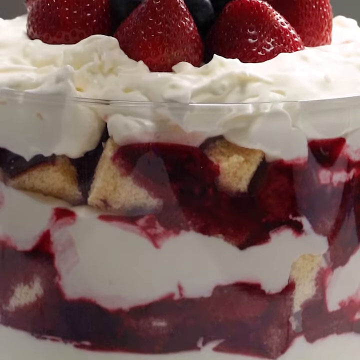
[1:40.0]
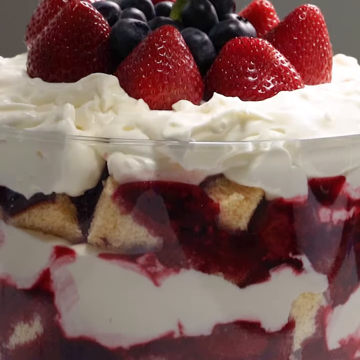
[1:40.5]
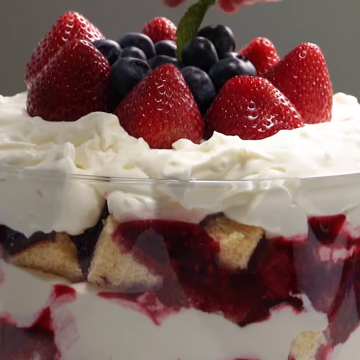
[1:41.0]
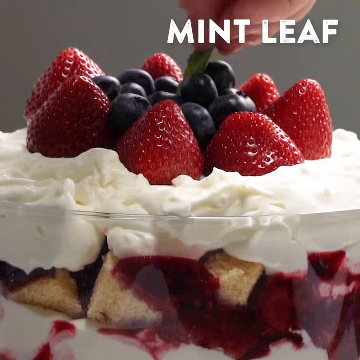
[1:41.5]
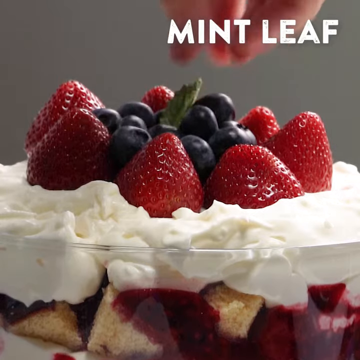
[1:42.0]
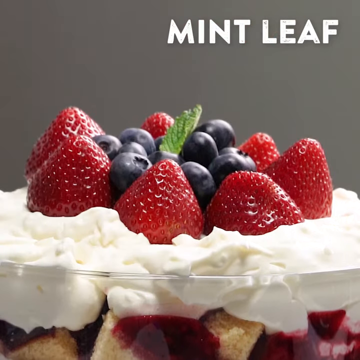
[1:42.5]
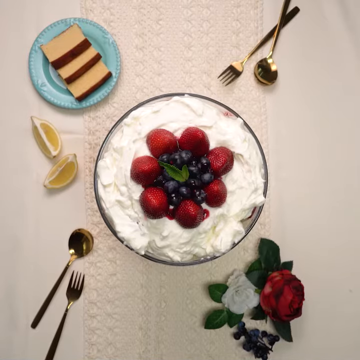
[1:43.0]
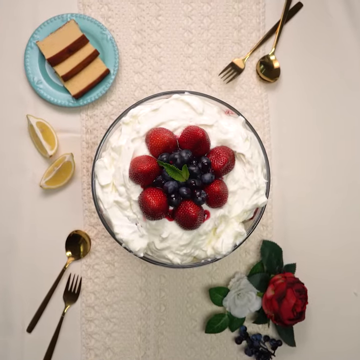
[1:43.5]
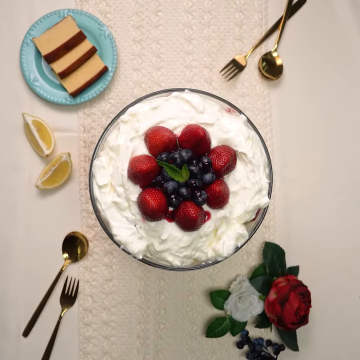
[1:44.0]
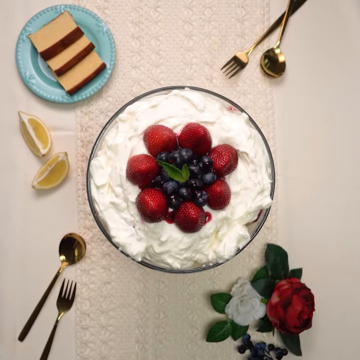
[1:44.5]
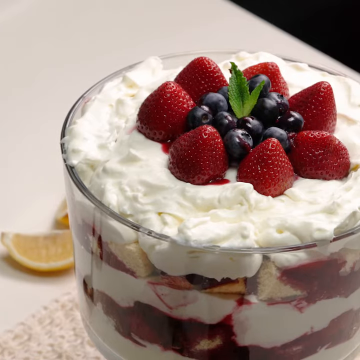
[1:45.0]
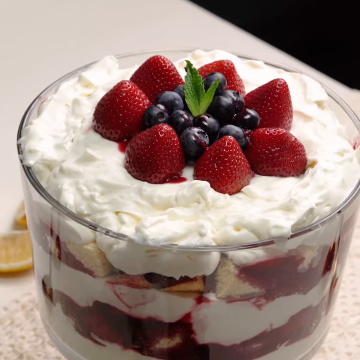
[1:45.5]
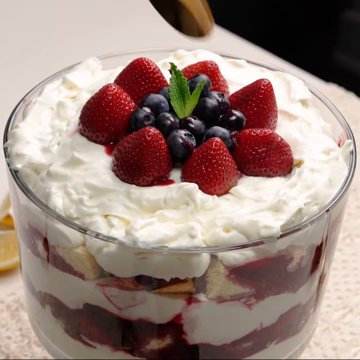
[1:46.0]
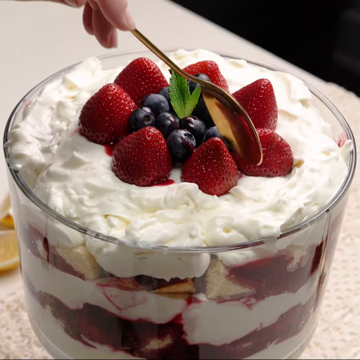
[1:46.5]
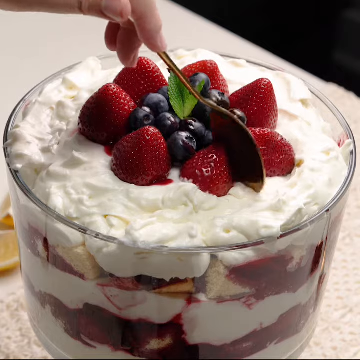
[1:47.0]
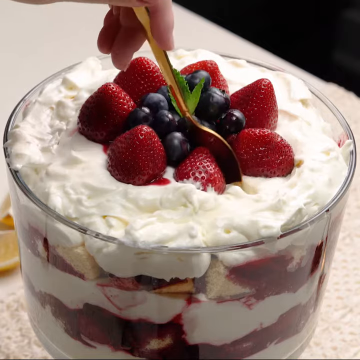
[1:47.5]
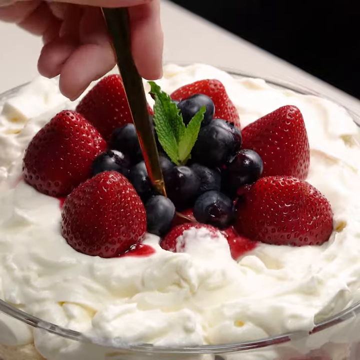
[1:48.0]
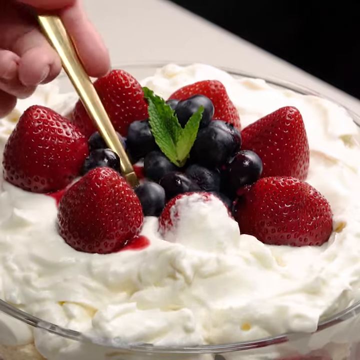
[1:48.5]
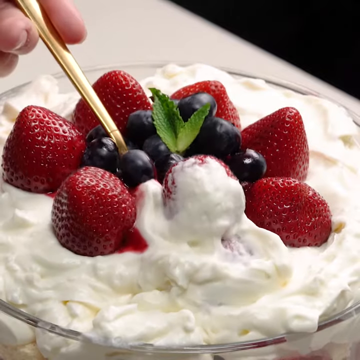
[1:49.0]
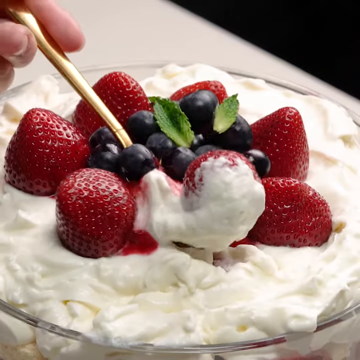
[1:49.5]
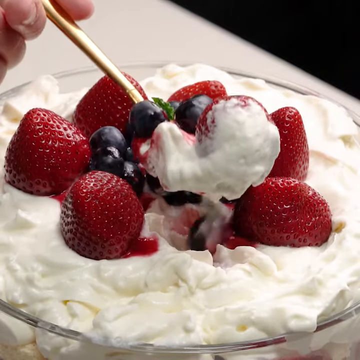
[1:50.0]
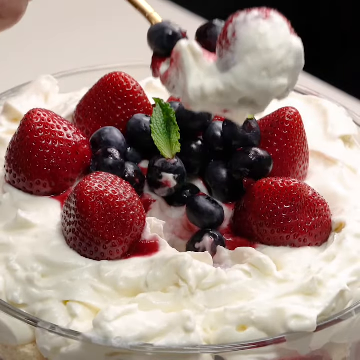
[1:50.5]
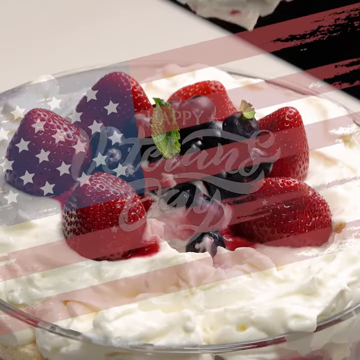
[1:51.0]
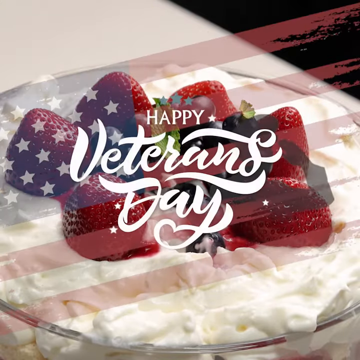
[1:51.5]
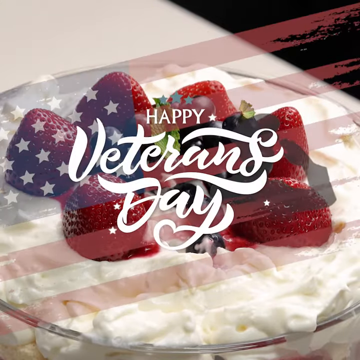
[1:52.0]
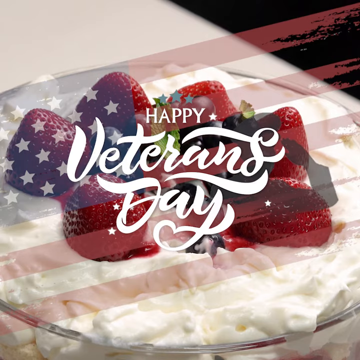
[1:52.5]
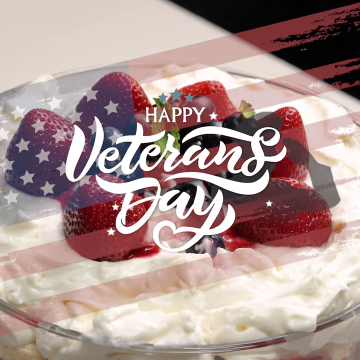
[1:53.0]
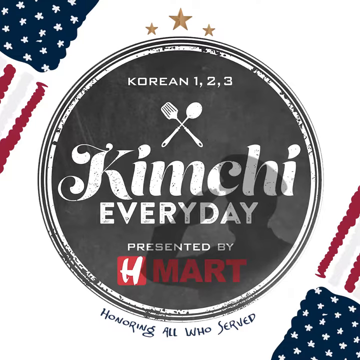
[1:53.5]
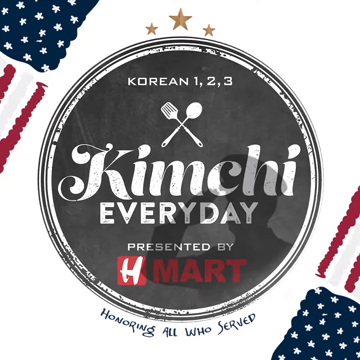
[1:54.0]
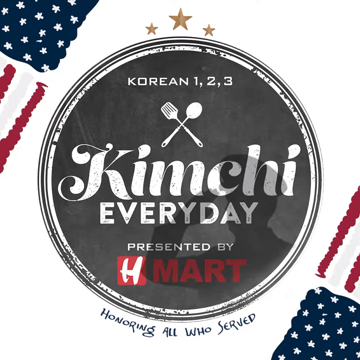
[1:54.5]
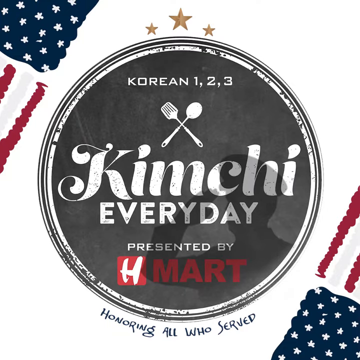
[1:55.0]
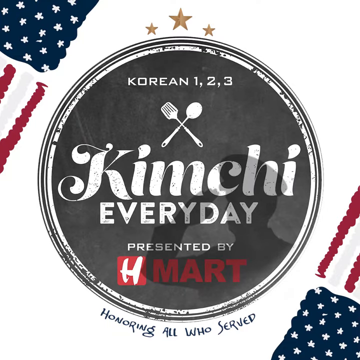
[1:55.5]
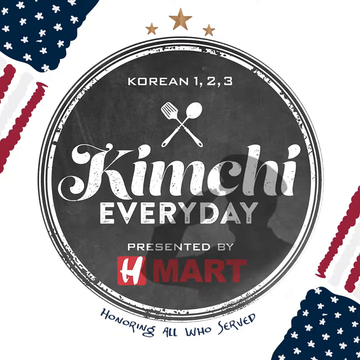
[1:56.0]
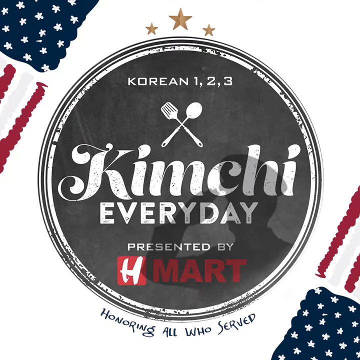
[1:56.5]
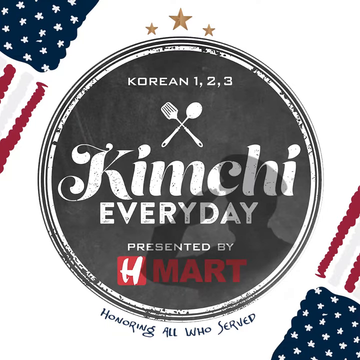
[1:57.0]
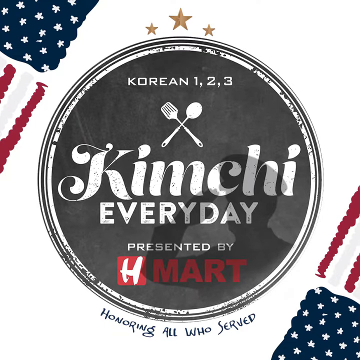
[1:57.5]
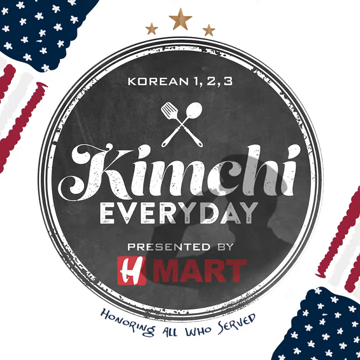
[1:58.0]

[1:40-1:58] A close-up shows the completed dessert and its layers: a berry mixture, followed by a cream mixture, then the bread and berry mixture, and a top layer of the cream cheese mixture. The camera pans to the top, where strawberries flank blueberries in the middle of the dessert, and a person adds a mint leaf to the center of the blueberries. An alternate angle taken from the top shows the strawberries arranged in a circular pattern with the blueberries and mint leaf in the middle; silverware and a plate of bread are also visible. A person lifts up a piece of the dessert with a spoon, and then "Happy Veterans Day" appears in white cursive letters in the center of the screen. After this, an advertisement is shown on the screen.